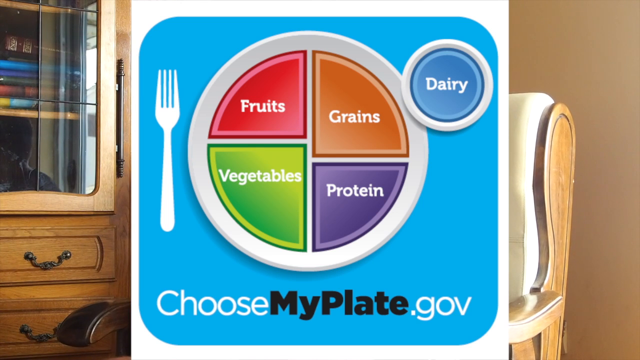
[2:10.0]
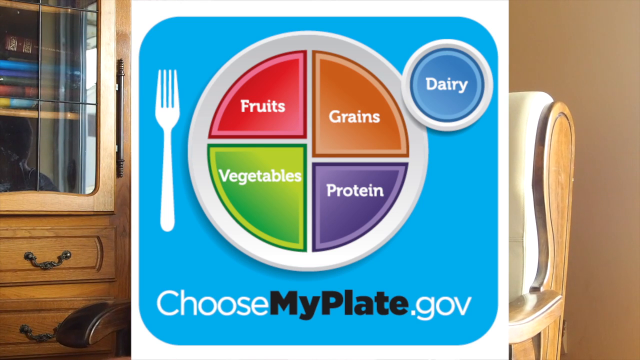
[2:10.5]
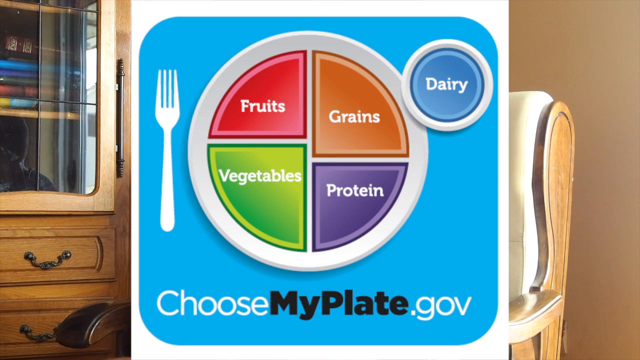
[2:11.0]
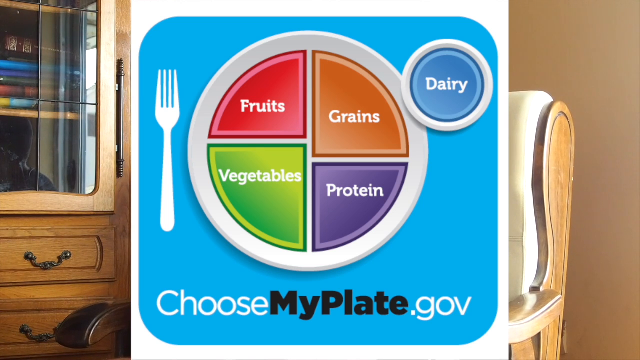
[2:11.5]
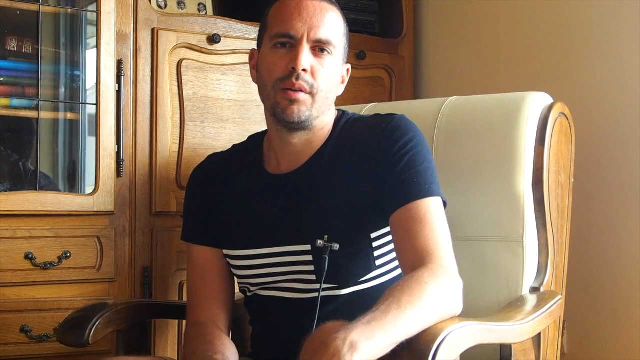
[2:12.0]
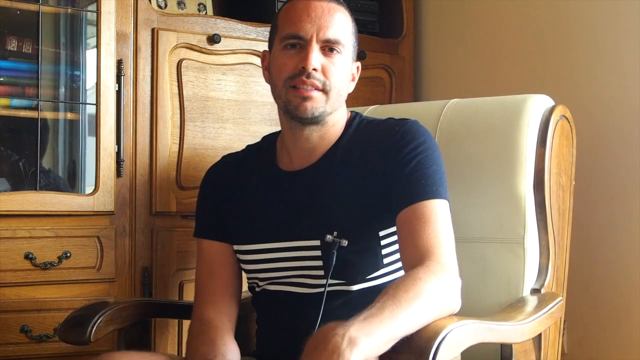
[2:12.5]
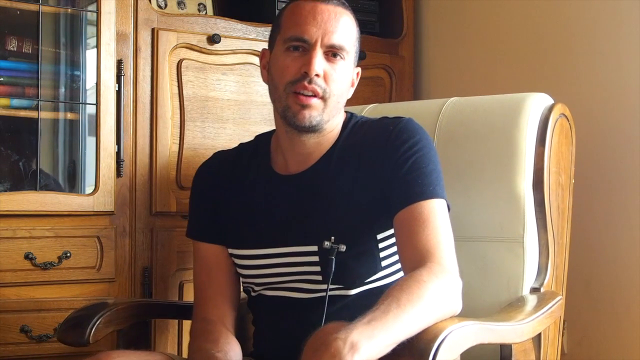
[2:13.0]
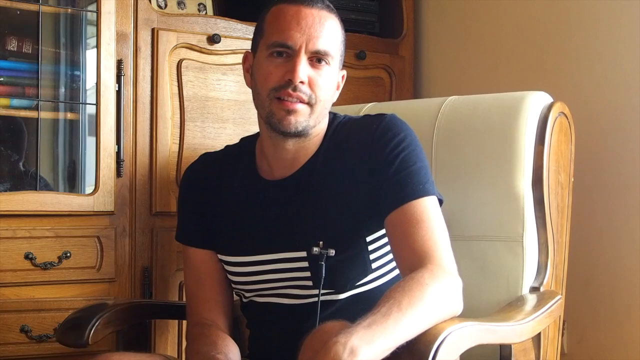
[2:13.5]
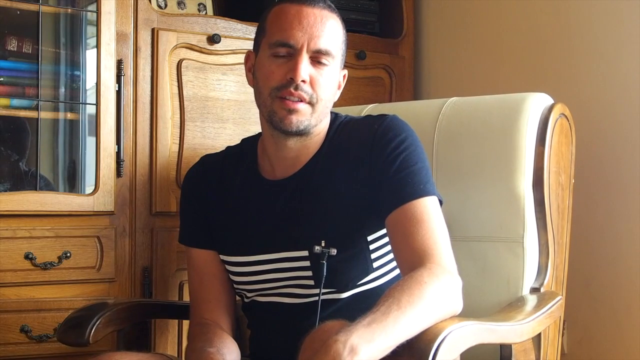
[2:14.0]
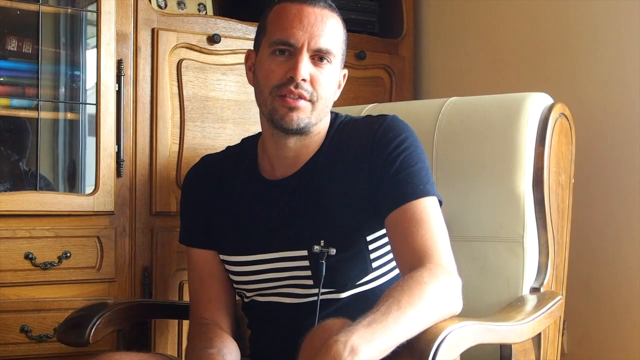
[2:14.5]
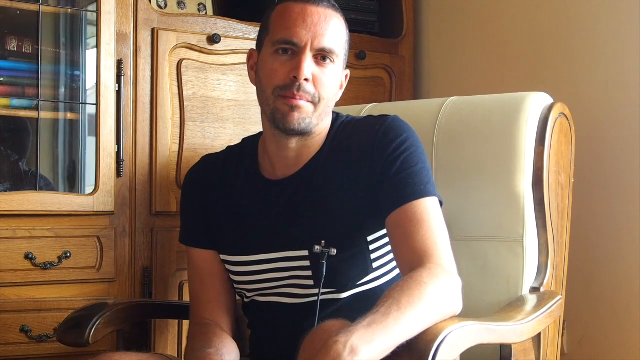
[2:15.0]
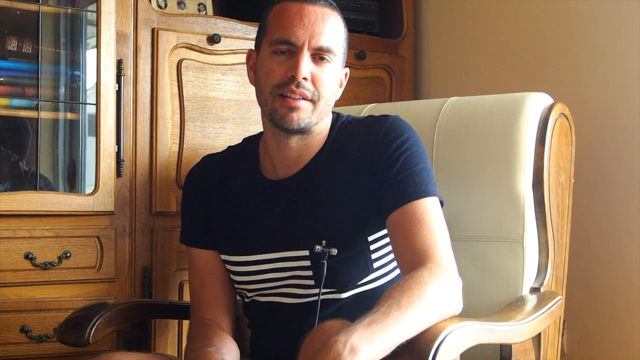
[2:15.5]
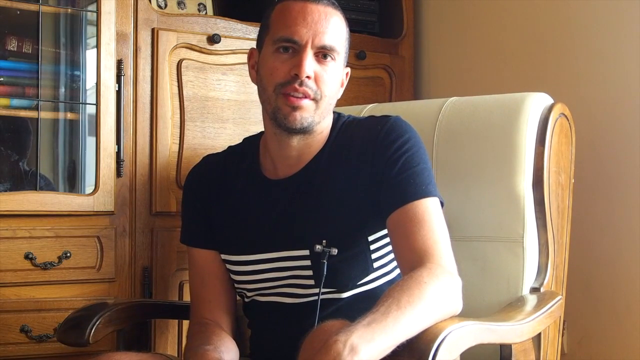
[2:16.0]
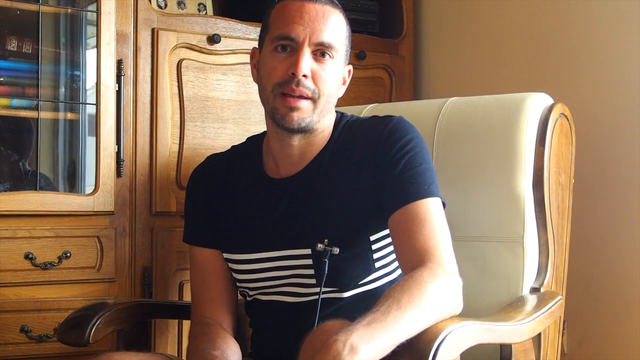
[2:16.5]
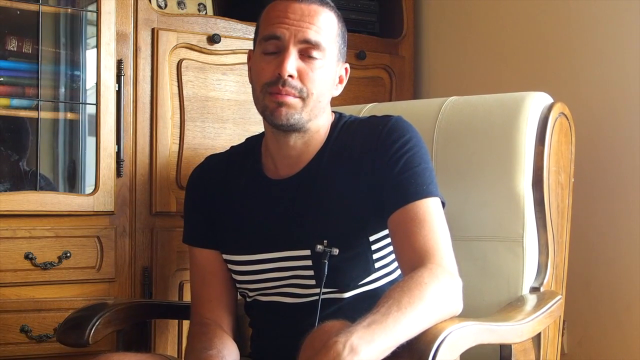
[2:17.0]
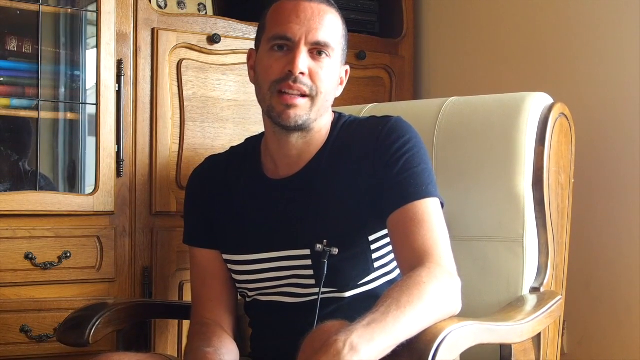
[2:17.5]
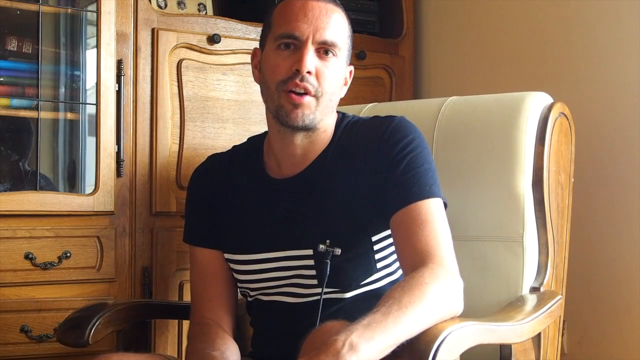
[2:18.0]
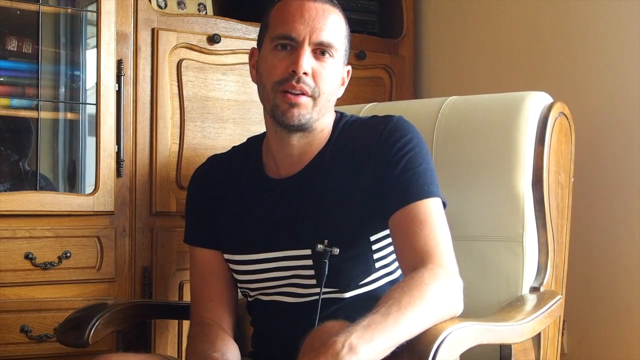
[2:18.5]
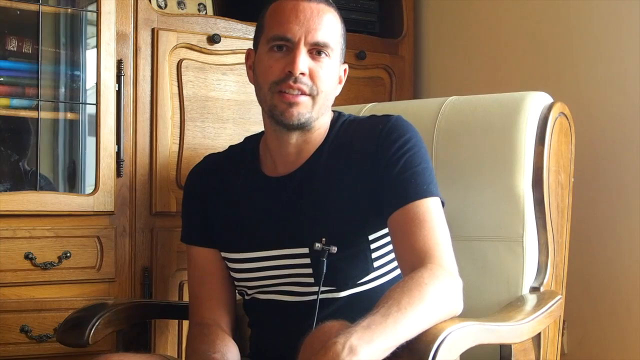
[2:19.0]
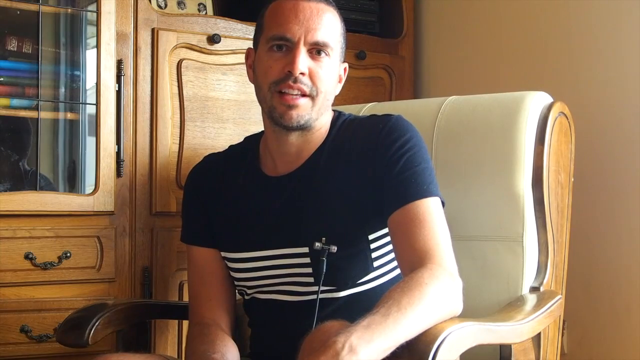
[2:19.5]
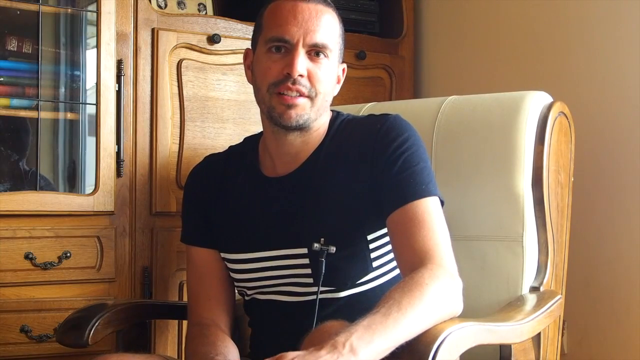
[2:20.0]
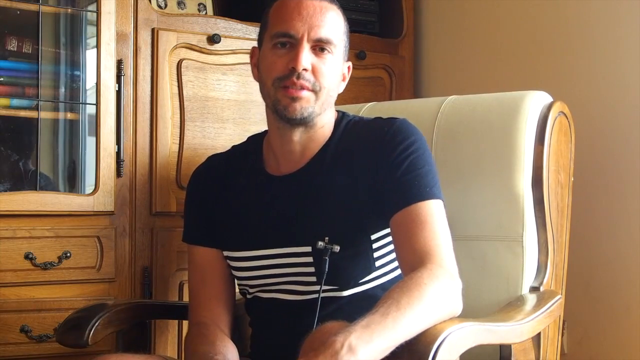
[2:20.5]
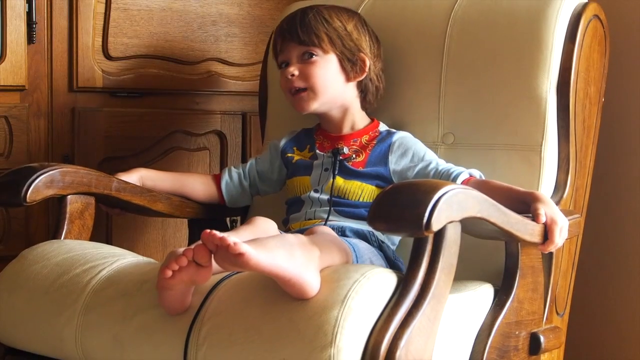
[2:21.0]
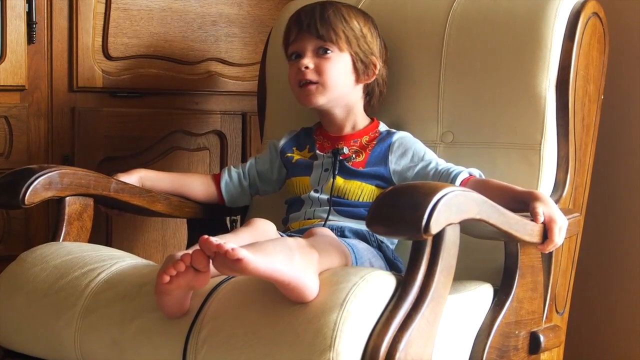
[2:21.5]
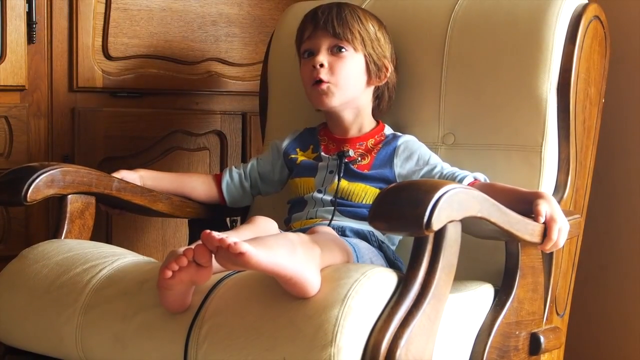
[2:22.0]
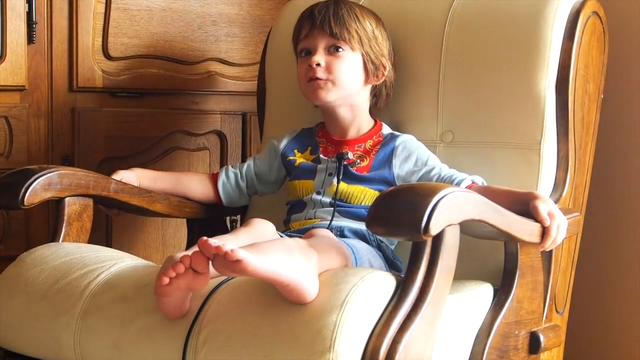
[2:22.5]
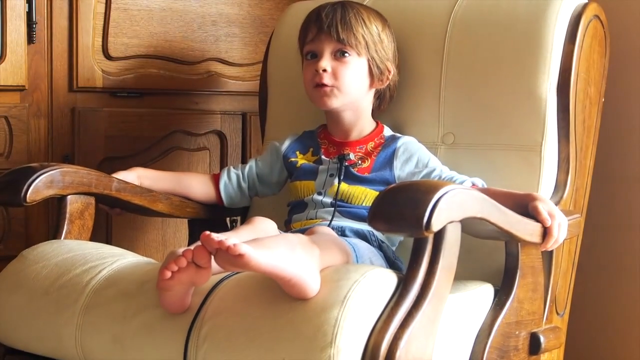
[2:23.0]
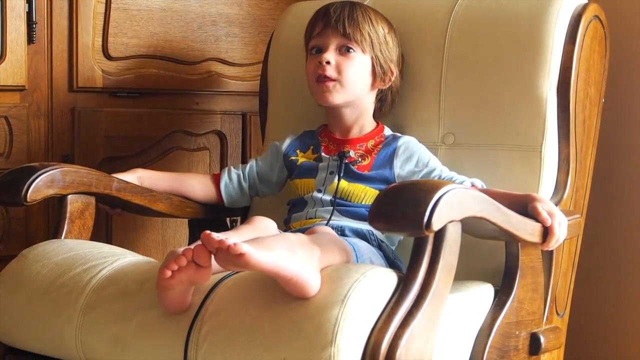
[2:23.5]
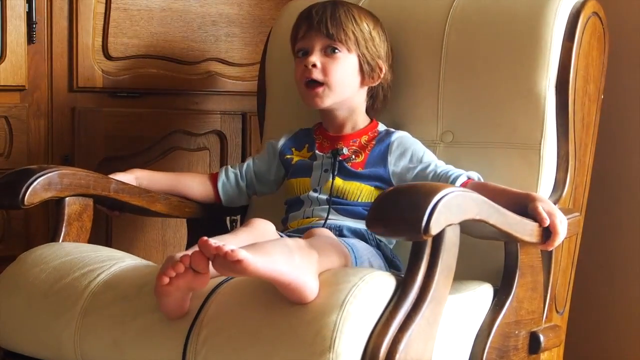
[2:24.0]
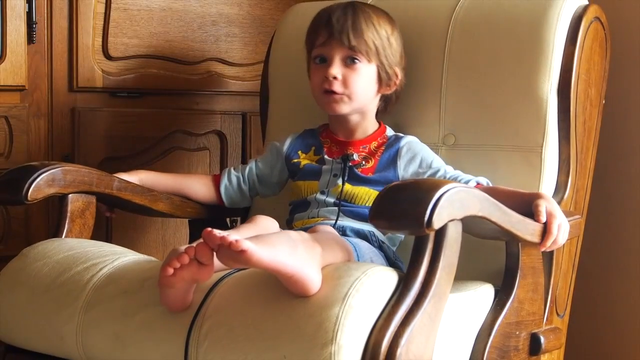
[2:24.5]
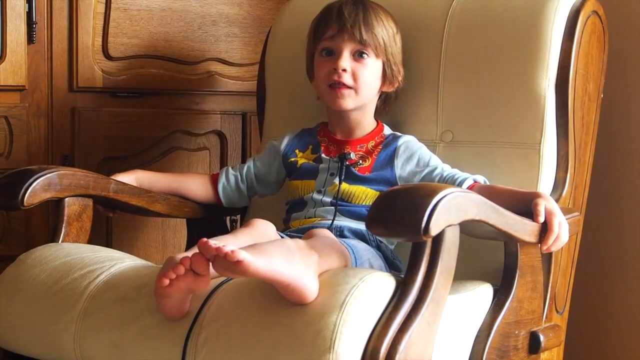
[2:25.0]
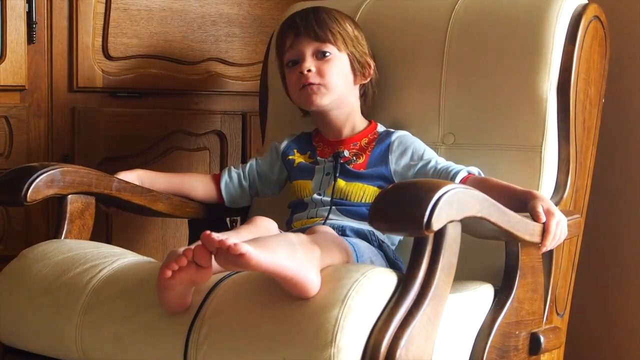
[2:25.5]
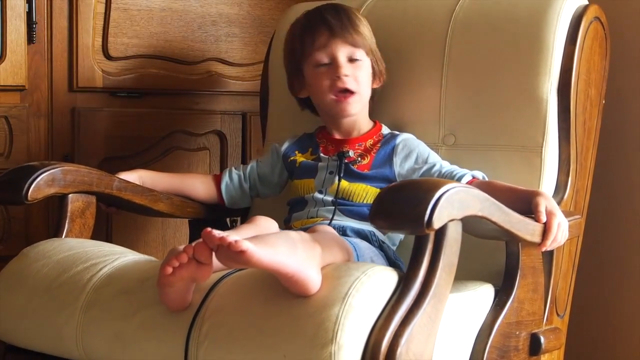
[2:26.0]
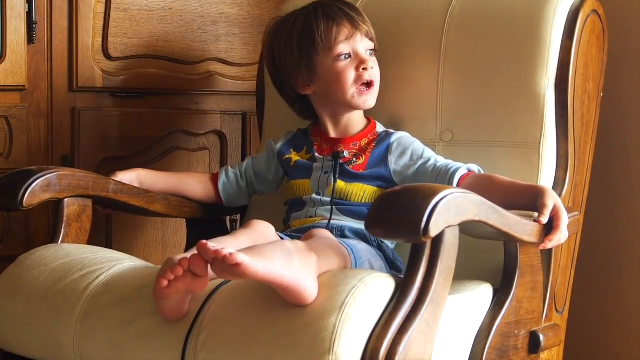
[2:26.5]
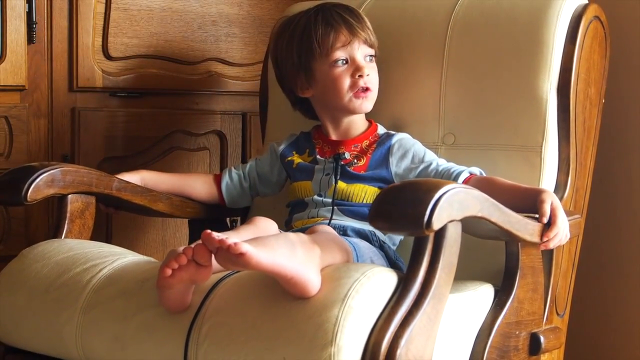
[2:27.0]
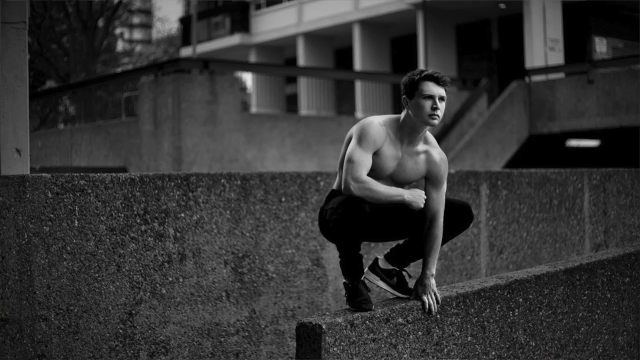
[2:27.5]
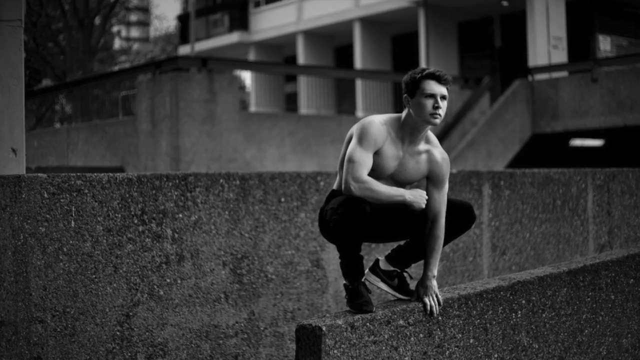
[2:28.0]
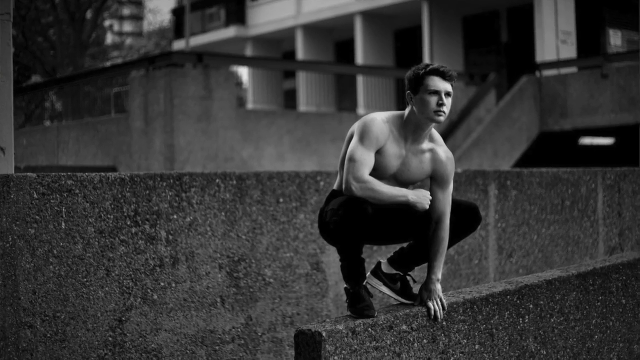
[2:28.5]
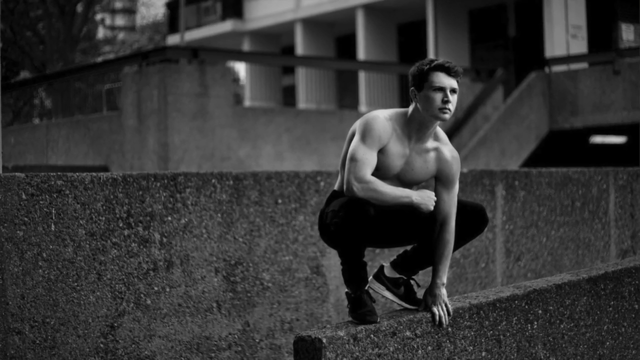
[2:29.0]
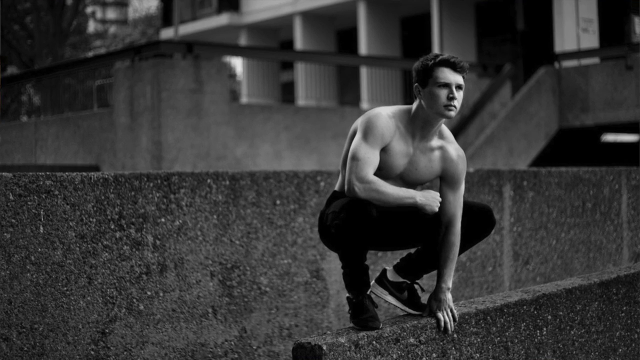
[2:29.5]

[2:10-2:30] The ChooseMyPlate.gov image is shown, and then the man speaking in the chair, looking towards the camera with a serious expression. A young child then sits in the same chair. He wears a cowboy shirt, a regular shirt, possibly a pajama shirt, with a pattern that makes it look like he has a handkerchief around his neck, a blue and yellow vest, and a badge on the right side of his chest, along with blue shorts and bare feet. His hands are on each hand rest, he has short, slightly shaggy brown hair, and his feet just barely hang off the seat of the chair. He is speaking and rocking the chair slightly. A black and white photo of a young man follows. He is squatting down on what looks like a curb, his left hand down on the ground, his right arm bent and resting on his right knee, looking intently forward. The background is somewhat blurred but looks like an urban area.